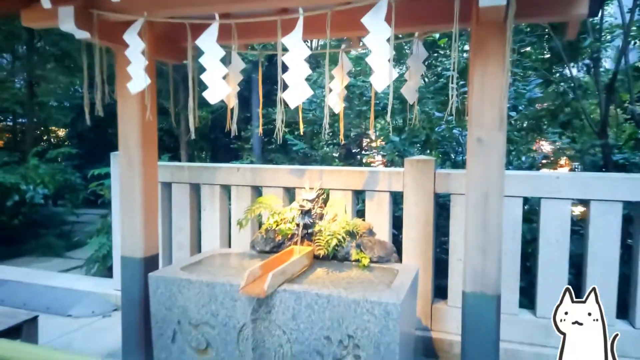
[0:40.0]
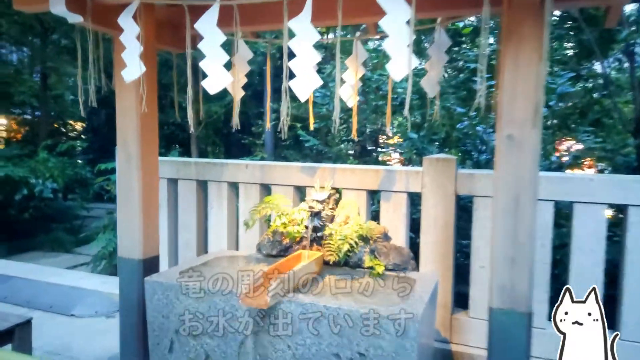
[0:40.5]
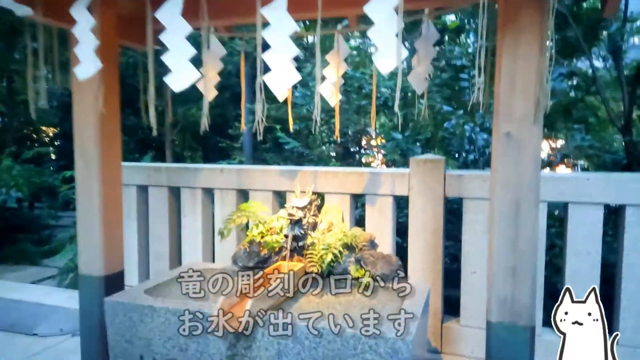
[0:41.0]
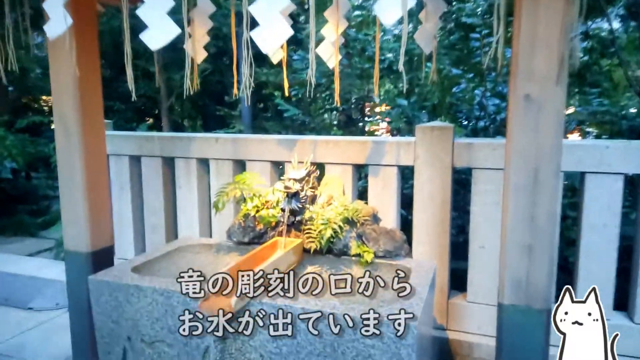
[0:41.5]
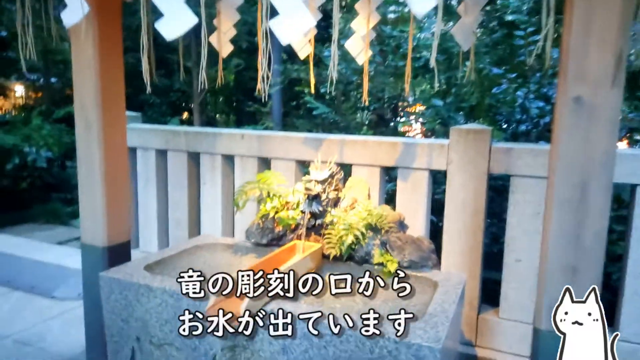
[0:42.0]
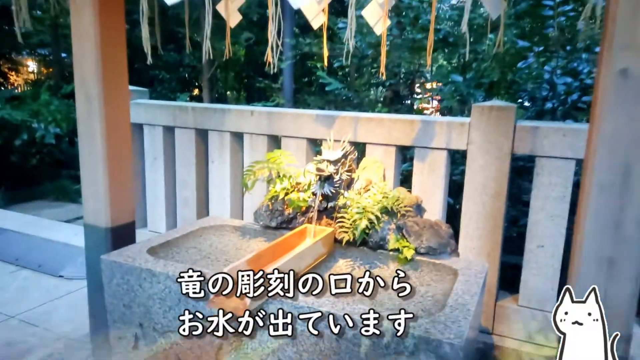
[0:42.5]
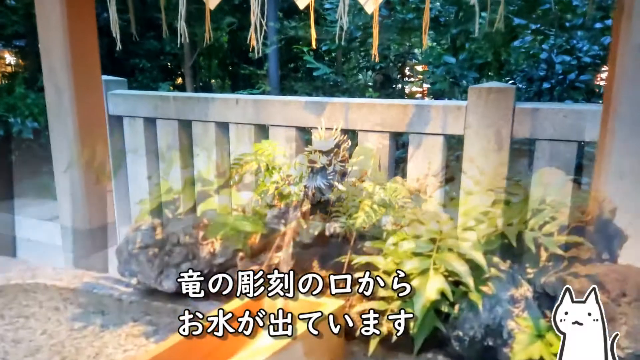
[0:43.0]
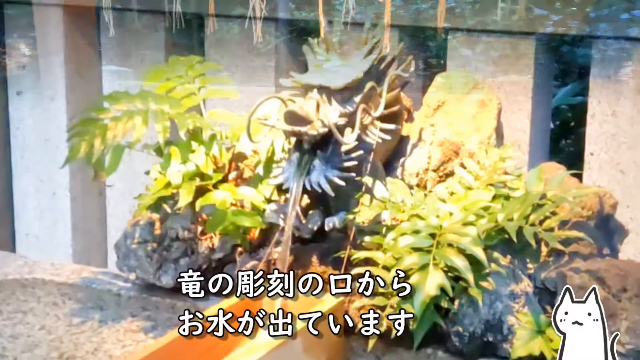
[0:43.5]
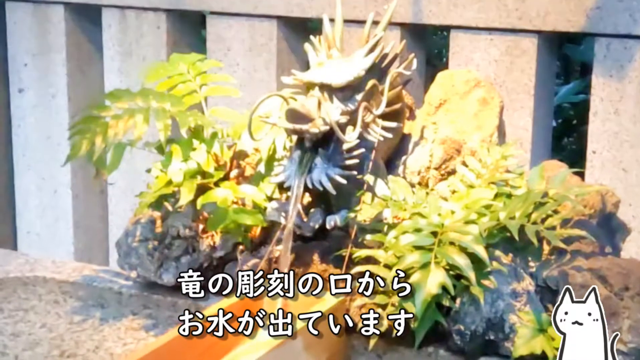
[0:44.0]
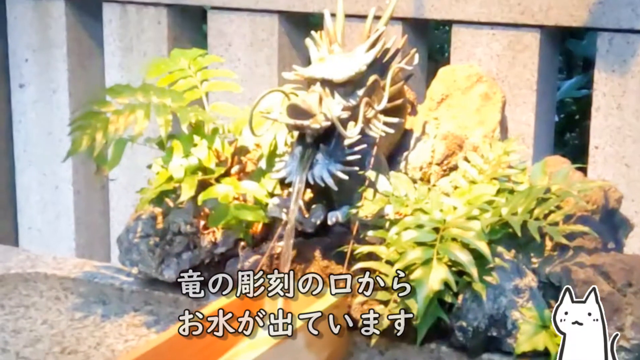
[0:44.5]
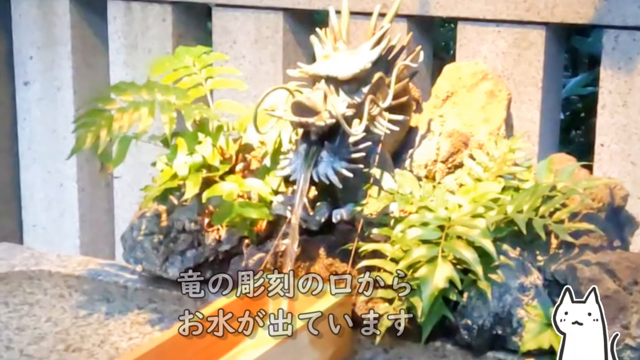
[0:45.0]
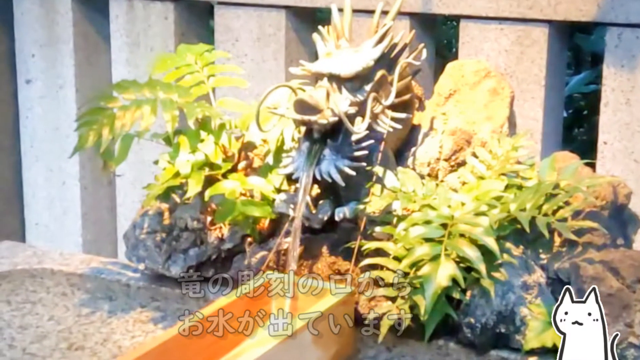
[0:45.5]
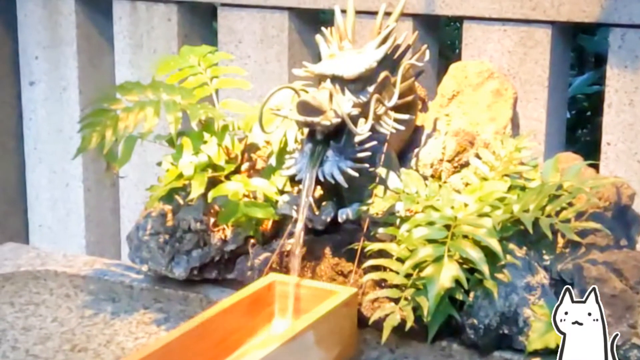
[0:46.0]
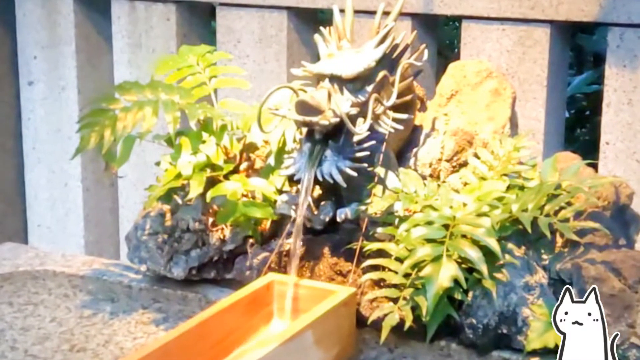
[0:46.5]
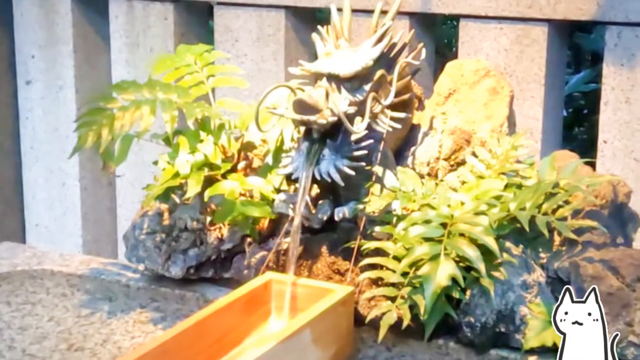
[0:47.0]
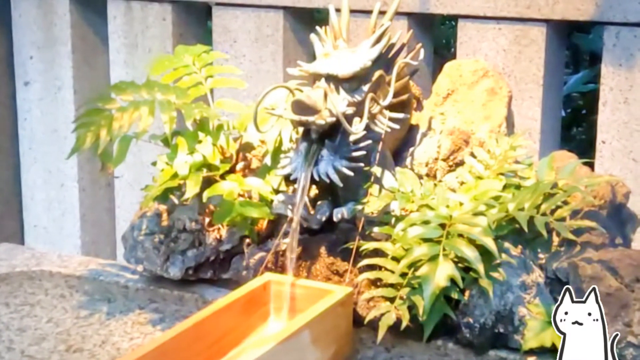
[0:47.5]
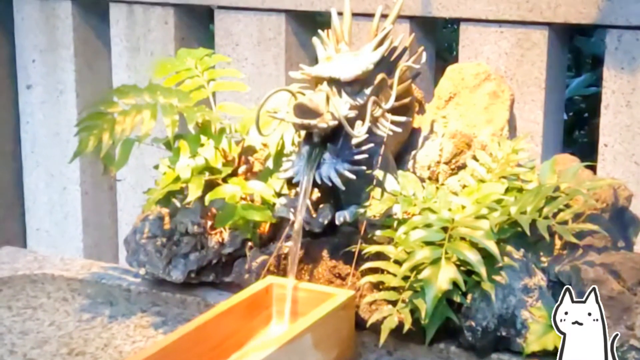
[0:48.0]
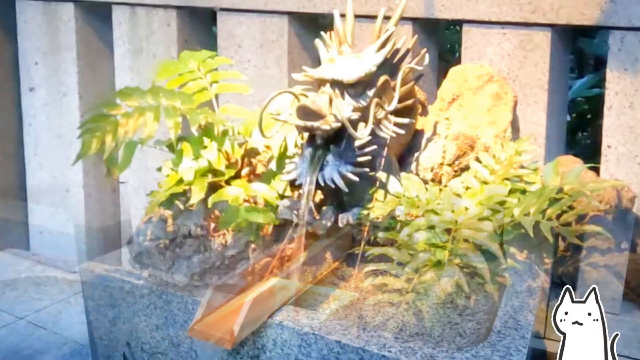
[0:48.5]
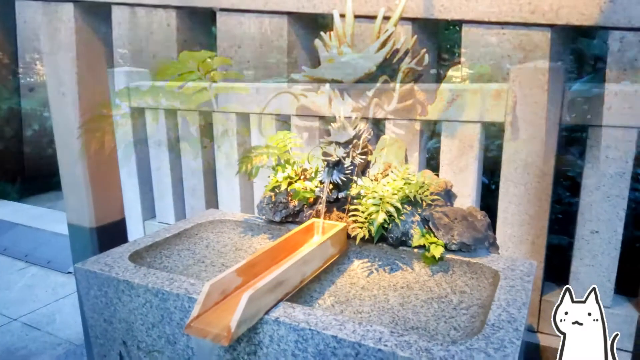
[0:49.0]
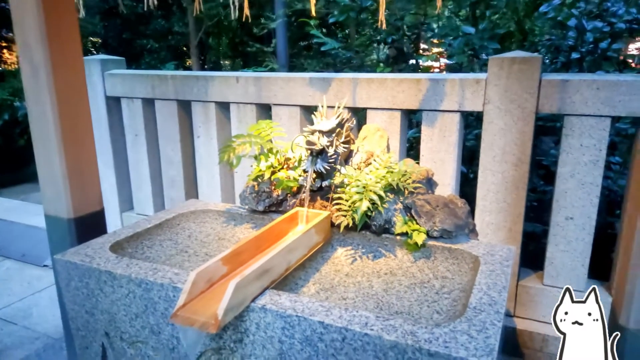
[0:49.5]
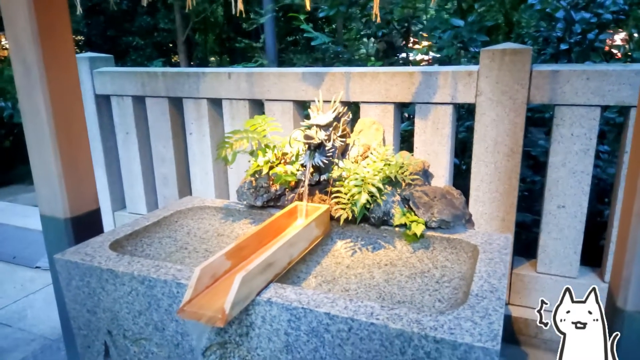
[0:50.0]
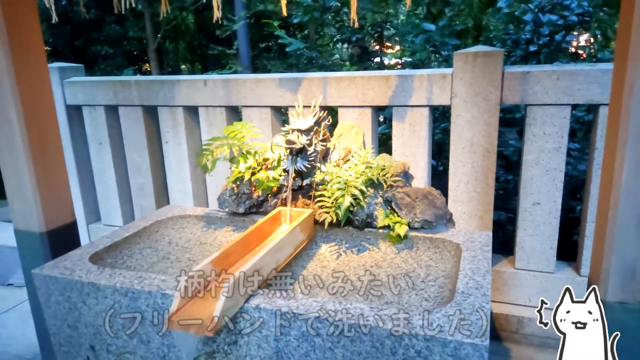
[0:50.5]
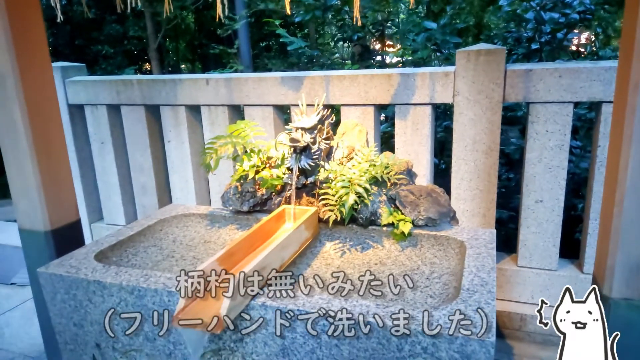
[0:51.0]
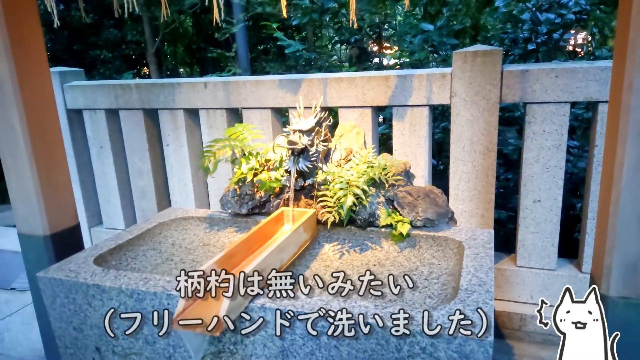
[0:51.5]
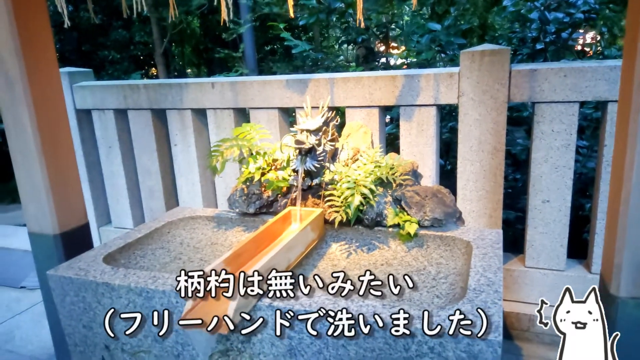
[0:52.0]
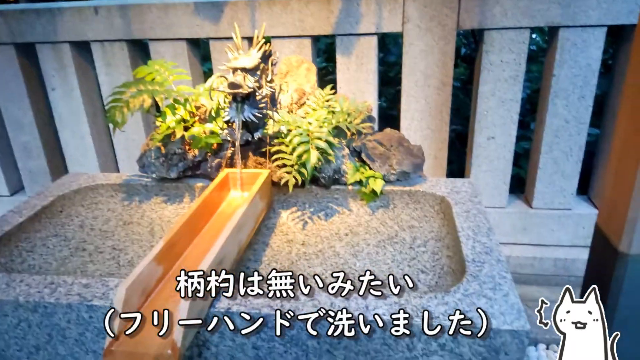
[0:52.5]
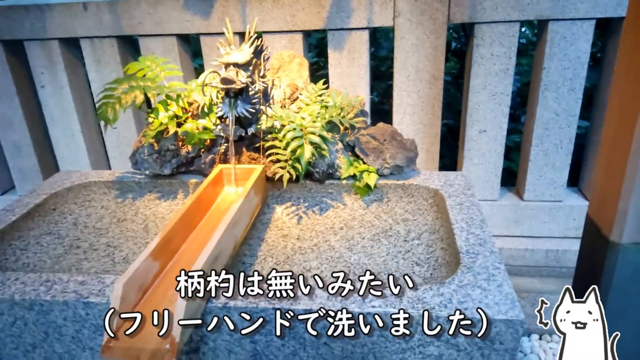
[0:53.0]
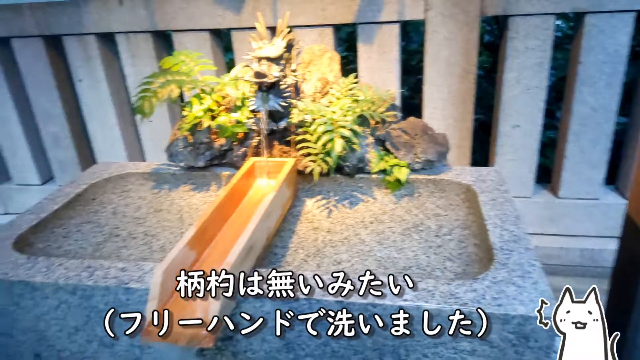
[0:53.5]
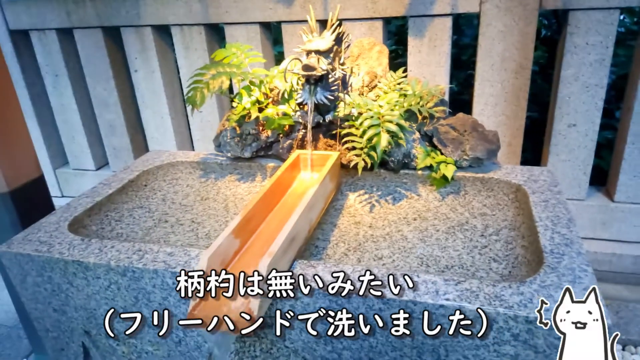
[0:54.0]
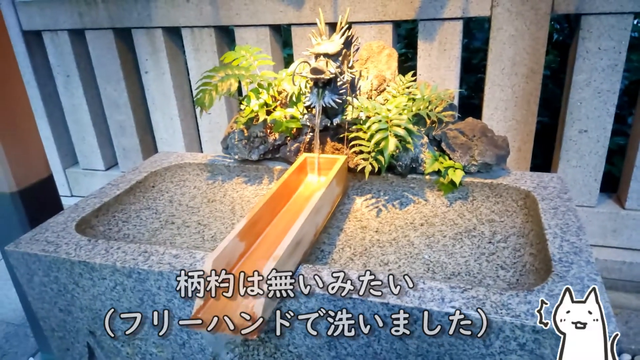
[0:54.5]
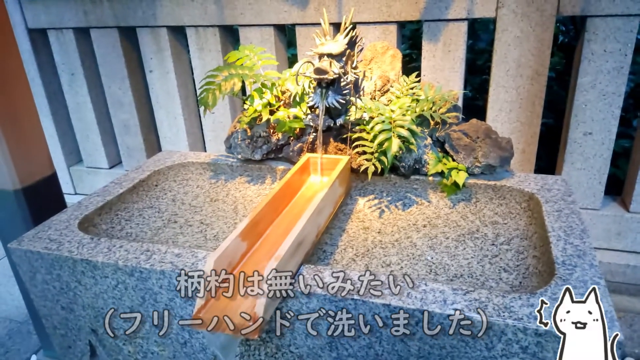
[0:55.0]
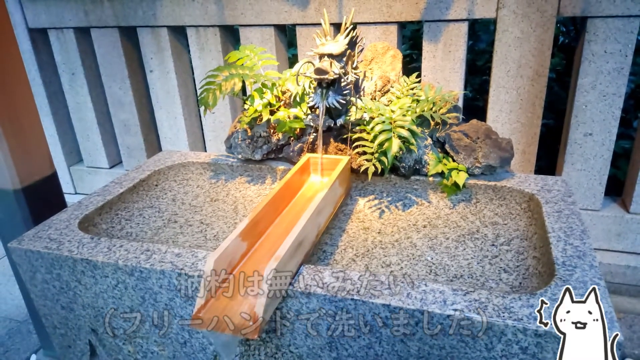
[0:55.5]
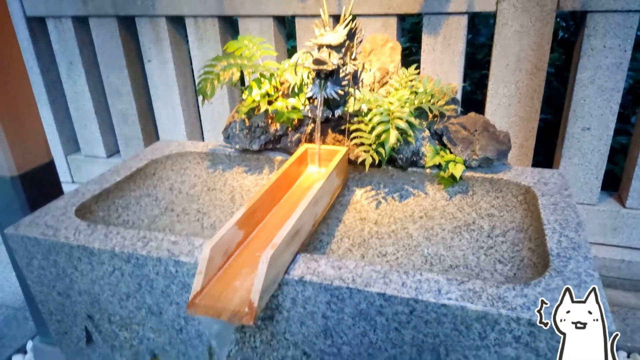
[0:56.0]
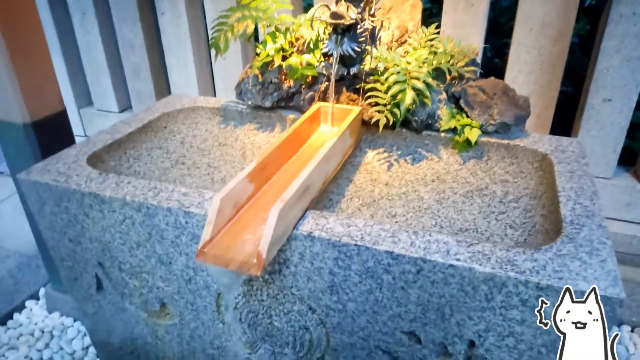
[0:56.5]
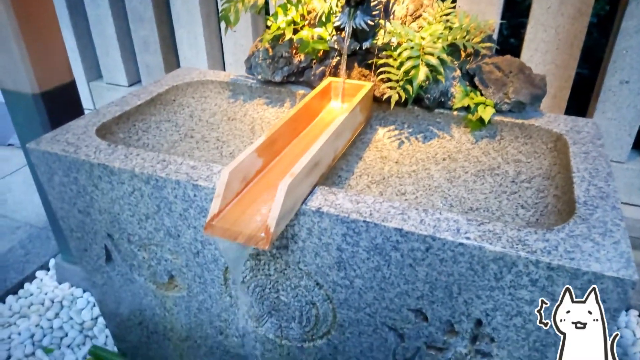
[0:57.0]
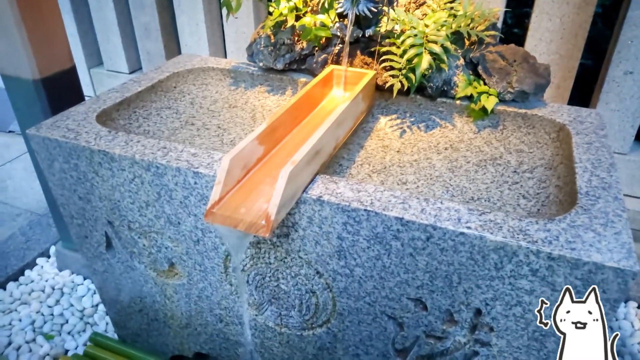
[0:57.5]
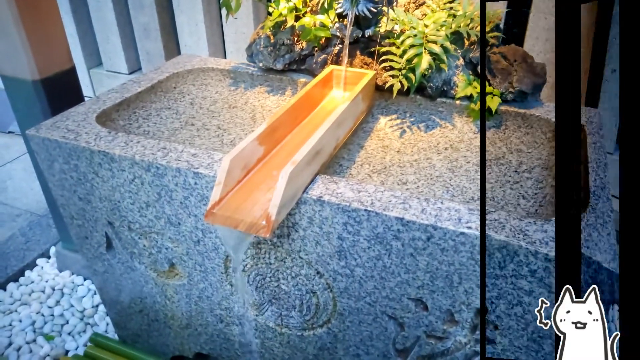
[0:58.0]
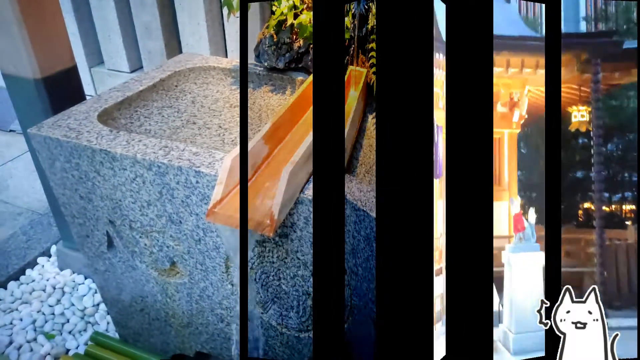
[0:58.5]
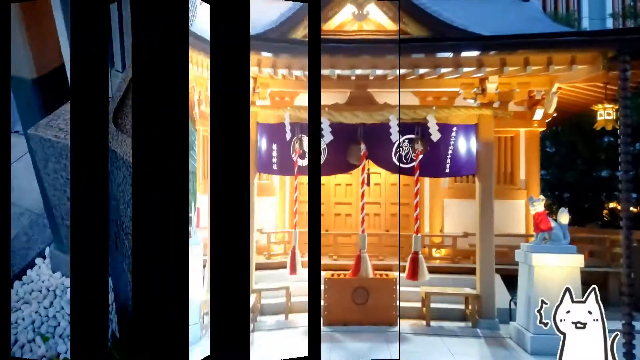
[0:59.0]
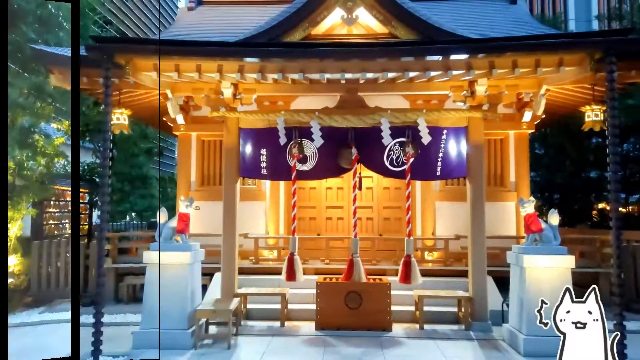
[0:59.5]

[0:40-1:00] The observer zooms in on the fountain gazebo, where there appears to be a dragon with water pouring out of its mouth into a trough; the water flows down to the base of the water gazebo and feeds back into the fountain. The dragon-like structure in the smaller gazebo is surrounded by shrubbery and rocks. Seven Asian lanterns hang down over the dragon water gazebo. Behind the gazebo is a stone gate, a stone fence, and behind that are lots of trees, bushes and green shrubbery surrounding the gazebo. A sidewalk leads out the side of the gazebo back into the shrubbery area, and a trail seems to run through the shrubbery. The view then moves to the larger gazebo.